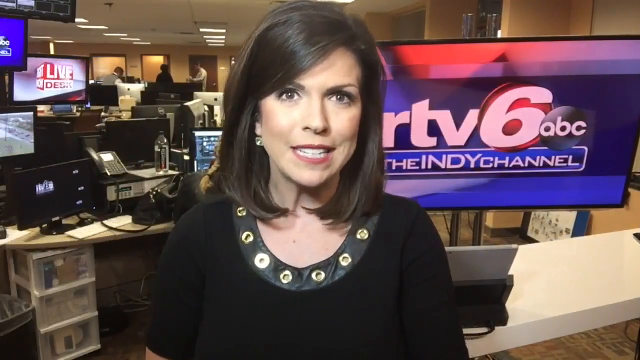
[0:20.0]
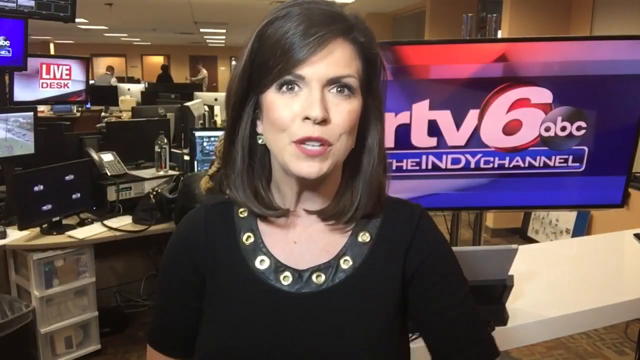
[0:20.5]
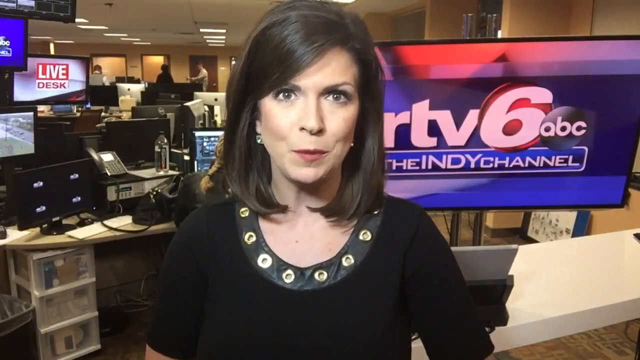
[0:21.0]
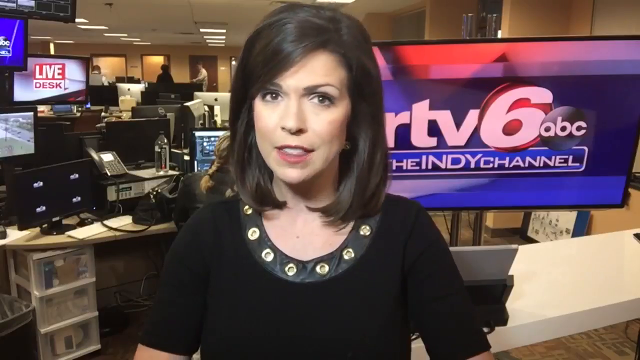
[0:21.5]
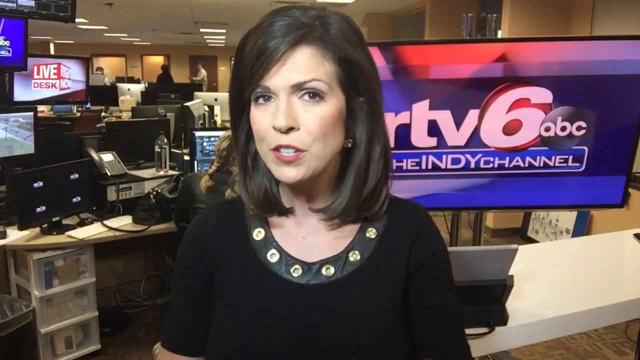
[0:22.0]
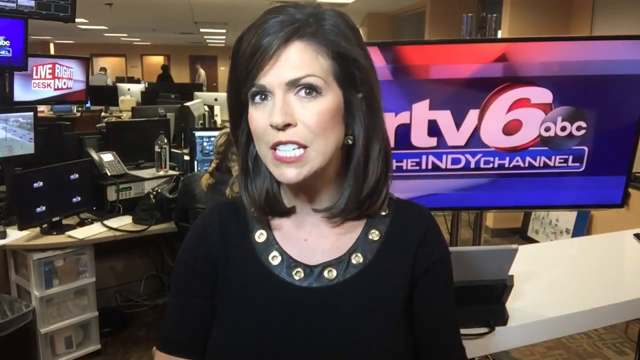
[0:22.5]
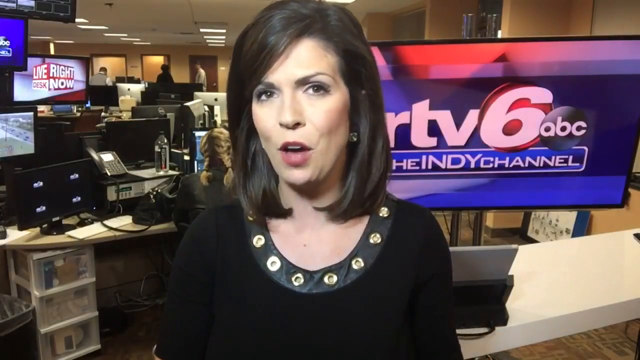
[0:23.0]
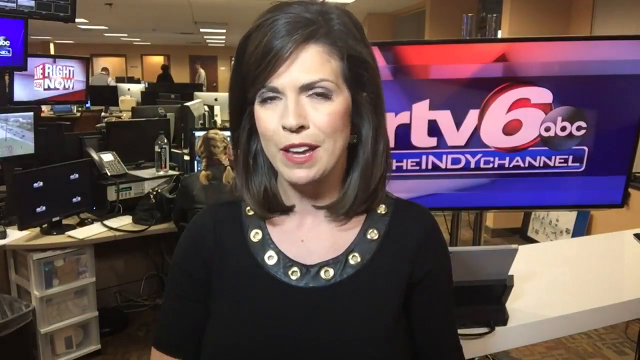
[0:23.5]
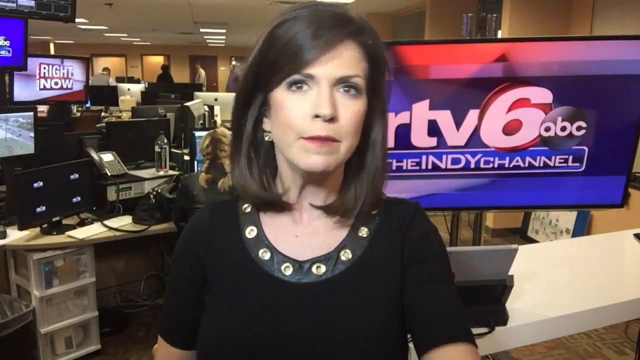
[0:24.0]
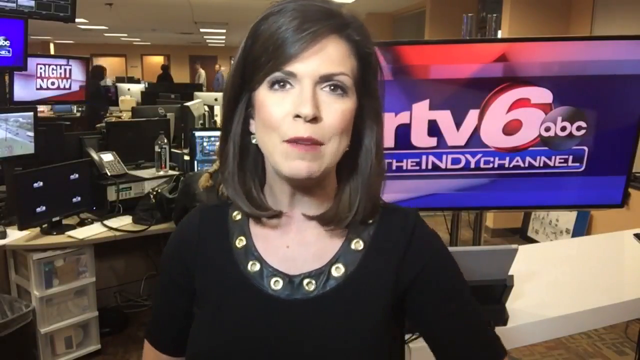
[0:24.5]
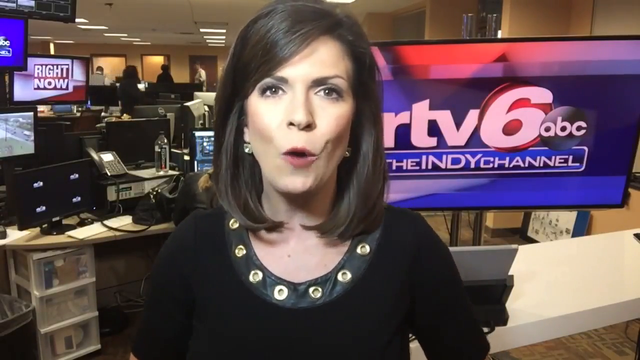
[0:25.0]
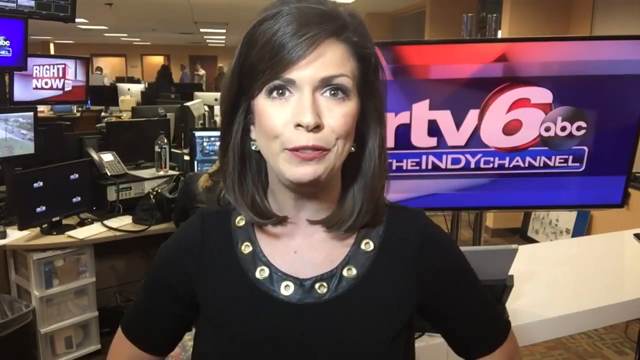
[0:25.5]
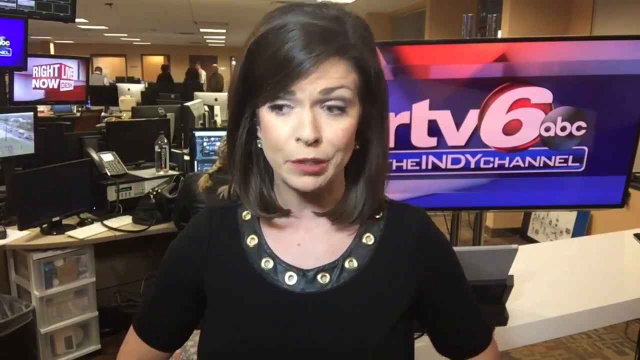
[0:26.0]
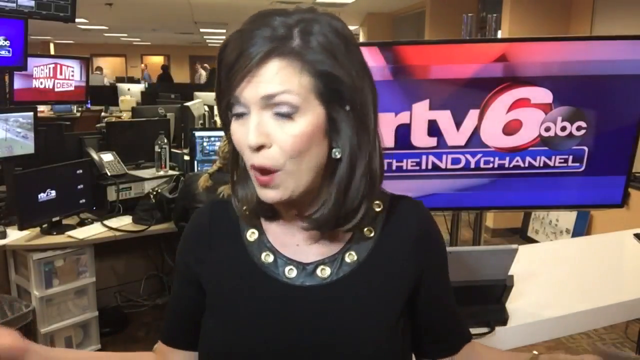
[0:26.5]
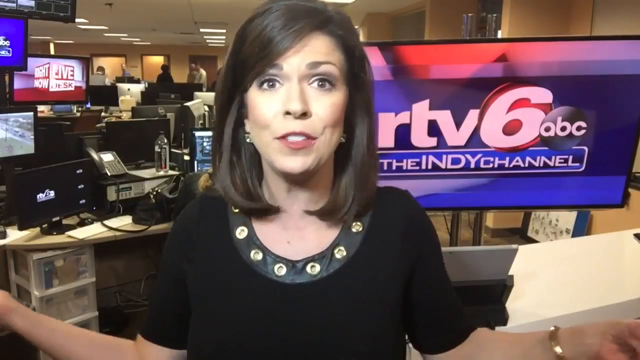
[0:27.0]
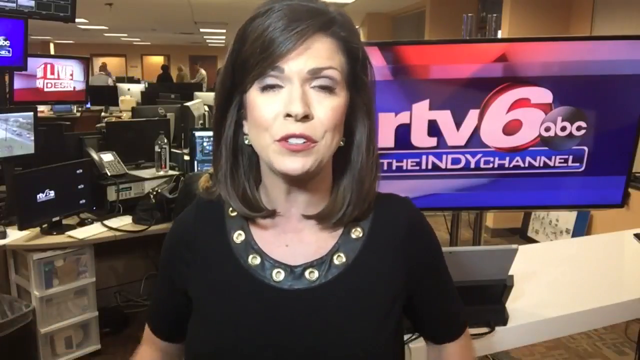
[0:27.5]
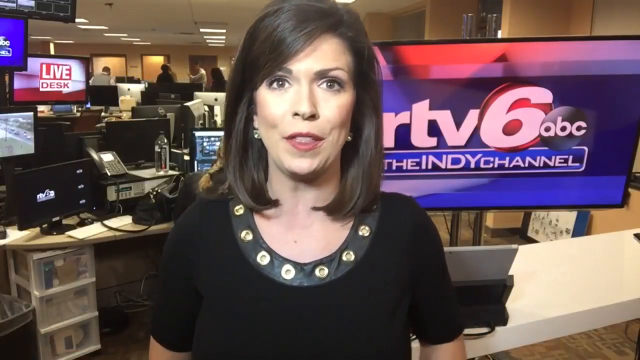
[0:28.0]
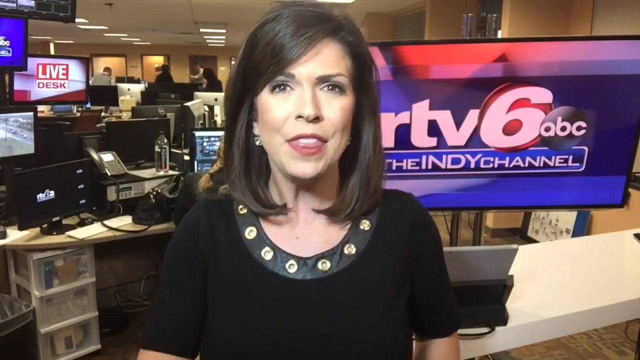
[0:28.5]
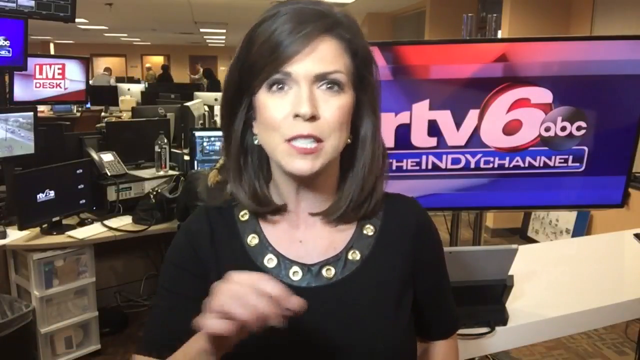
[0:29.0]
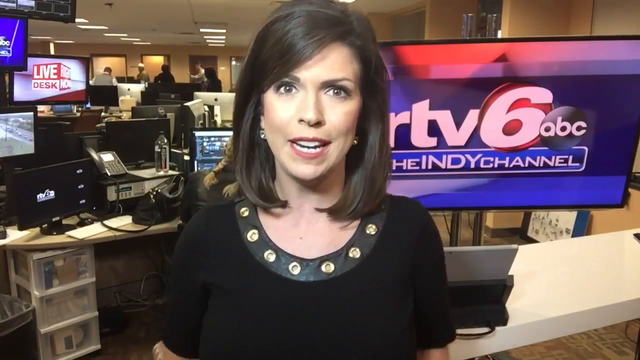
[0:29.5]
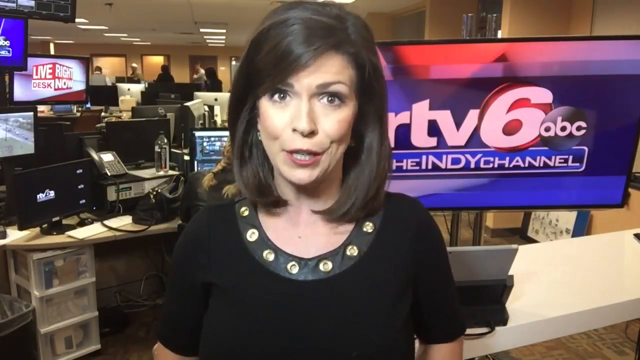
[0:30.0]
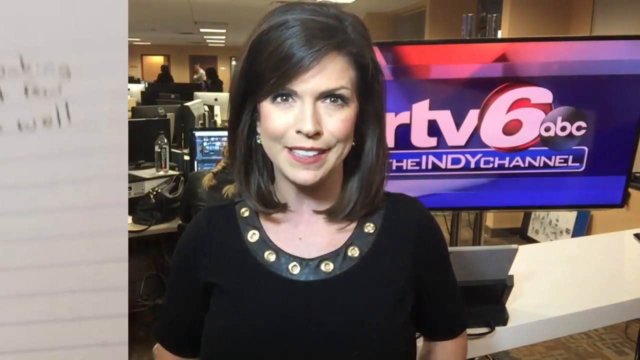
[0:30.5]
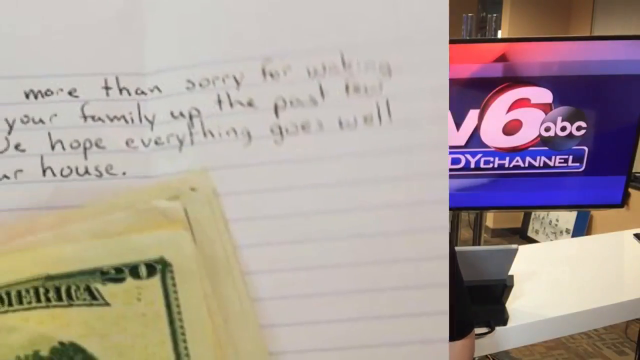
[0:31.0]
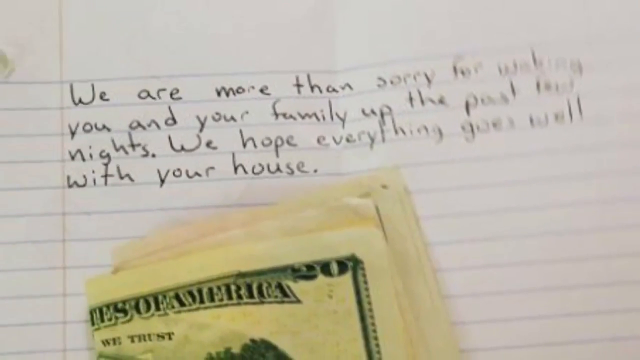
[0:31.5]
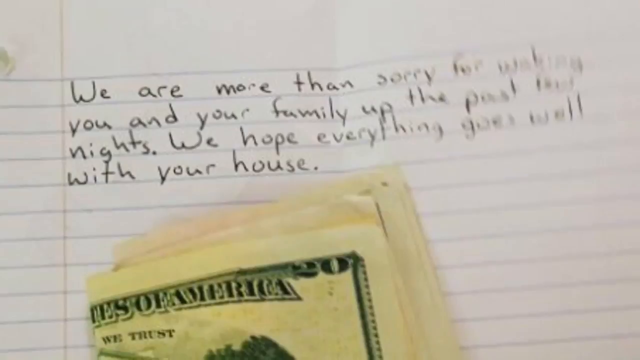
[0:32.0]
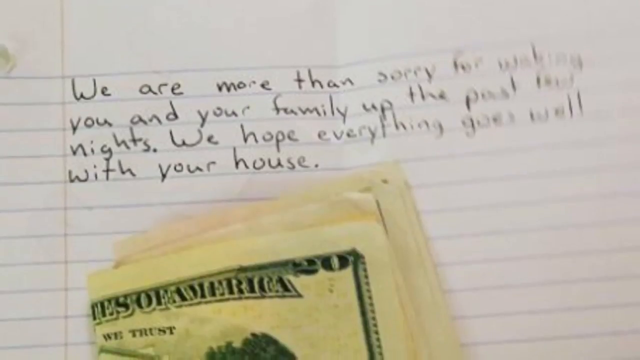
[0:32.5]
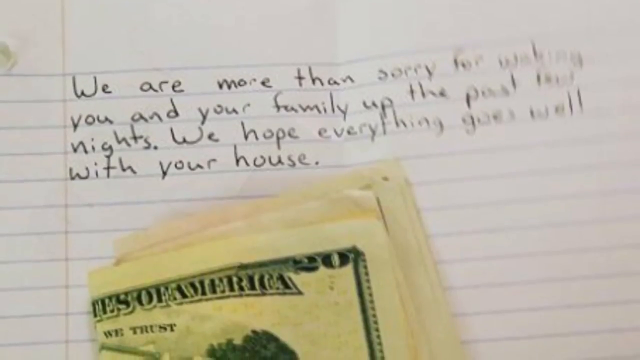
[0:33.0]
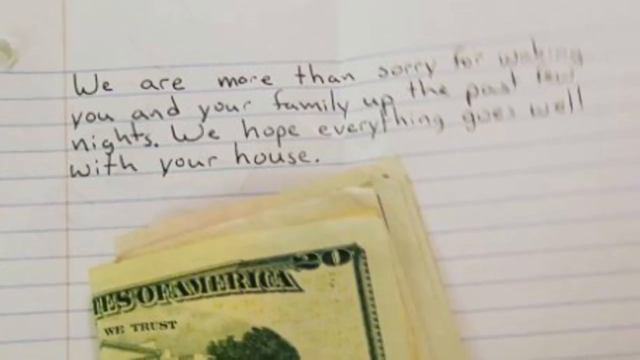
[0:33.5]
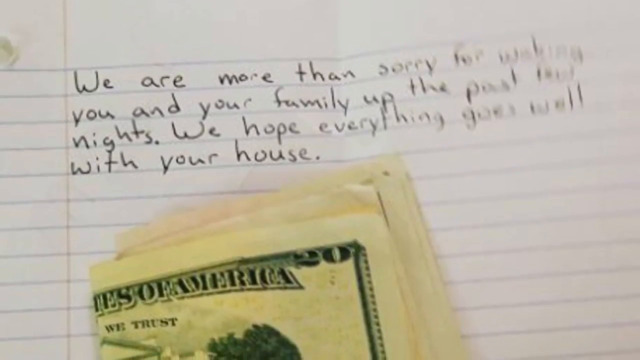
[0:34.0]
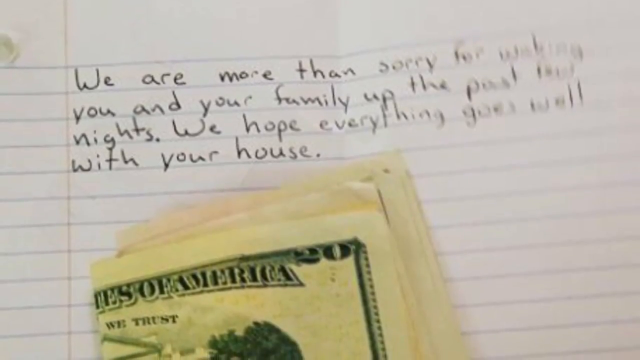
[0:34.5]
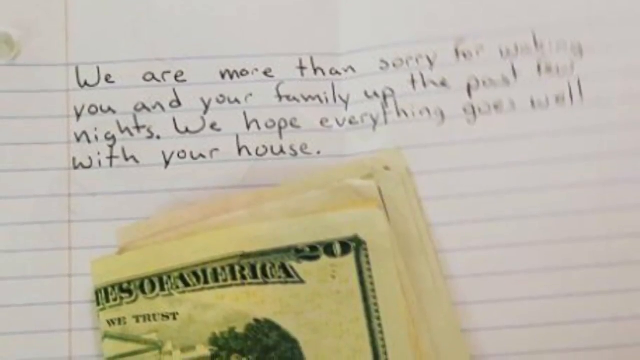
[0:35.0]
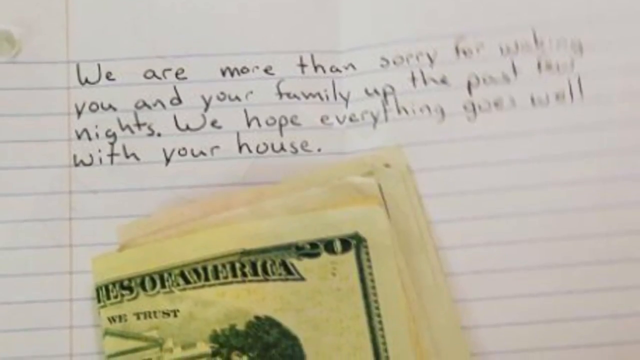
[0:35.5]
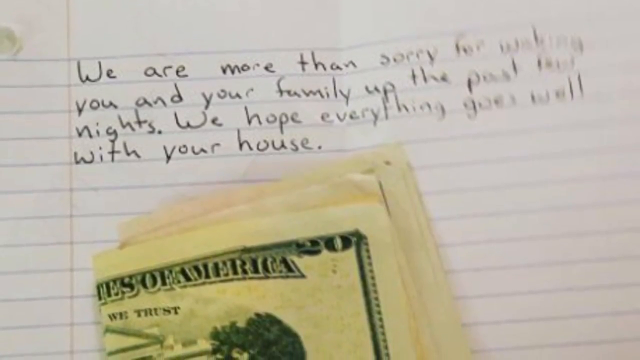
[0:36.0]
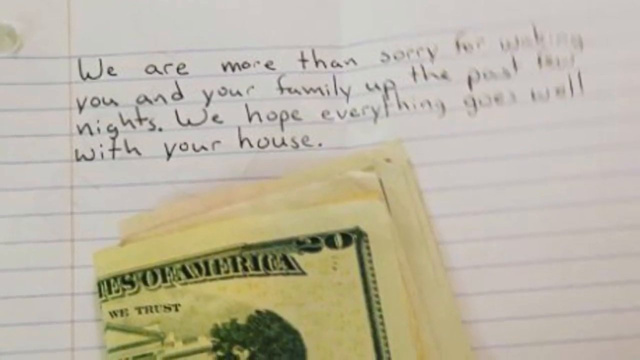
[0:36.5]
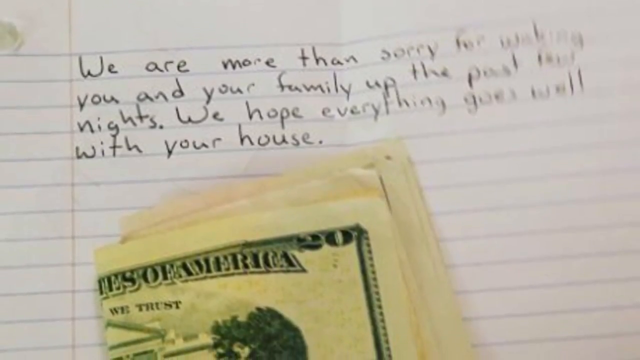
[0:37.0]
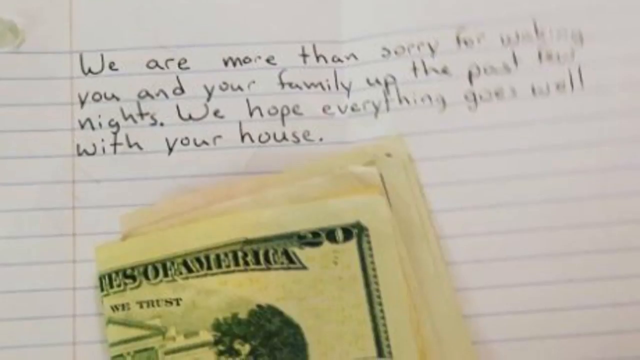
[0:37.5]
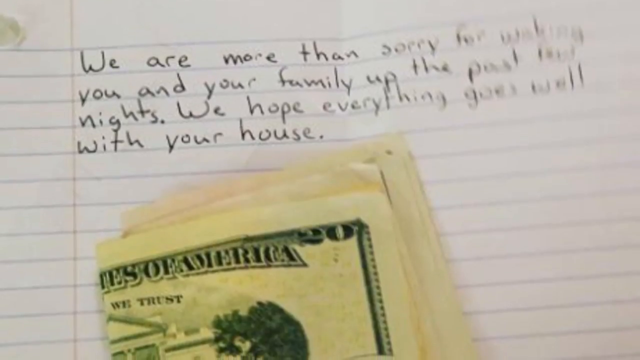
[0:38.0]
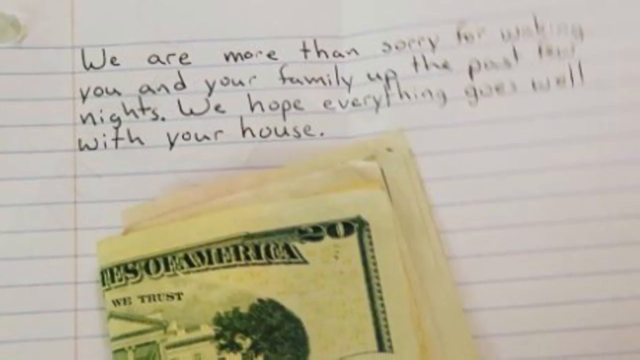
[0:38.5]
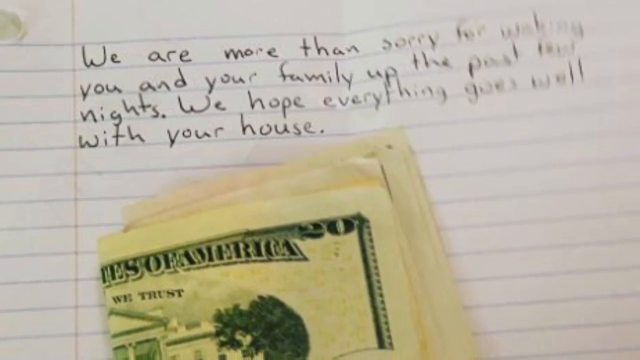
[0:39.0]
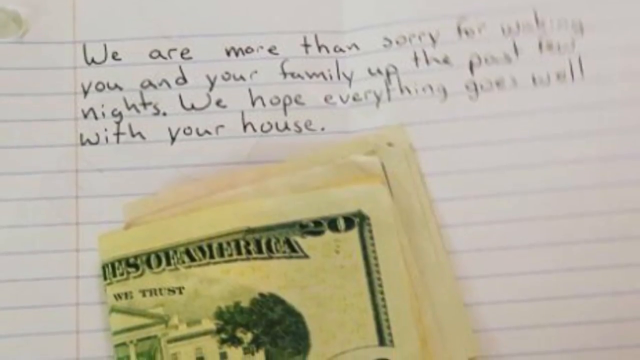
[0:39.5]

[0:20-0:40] A news segment for WRTV6 ABC, the Indy Channel, shows a reporter in a black dress with what look like gold circles around the neck on the collar. She has shoulder-length brown hair. Text behind her reads "WRTV6ABC," and she talks directly to the camera, moving her hands a little. A note then pops up, taking up the whole screen, apparently in red. It reads "We are more than sorry for waking you and your family up the past few nights. We hope everything goes well with your house." A stack of money is on top of the note: a 20 with a bunch of bills under it. The view pans down from the top of the note to the pile of money, giving the viewer time to read the note.